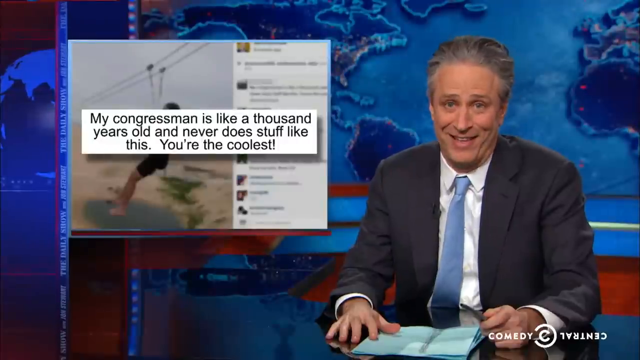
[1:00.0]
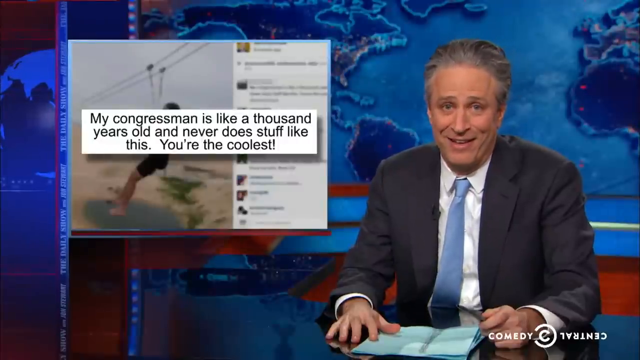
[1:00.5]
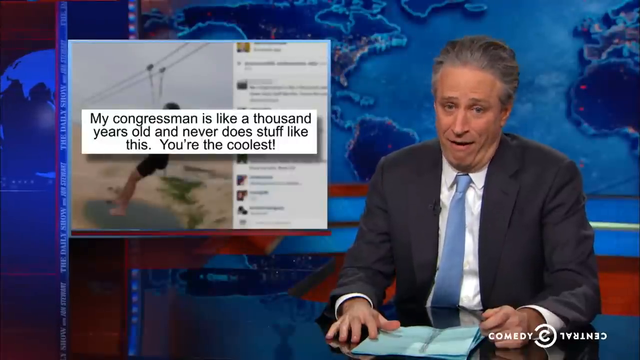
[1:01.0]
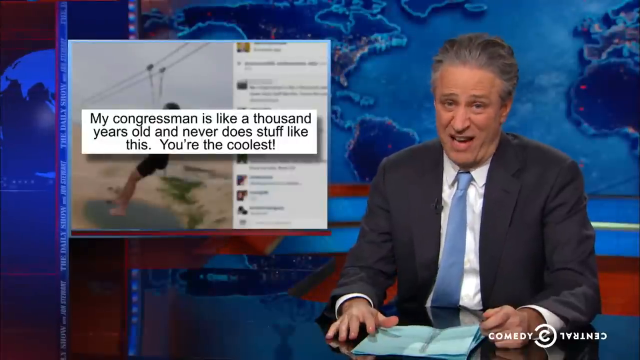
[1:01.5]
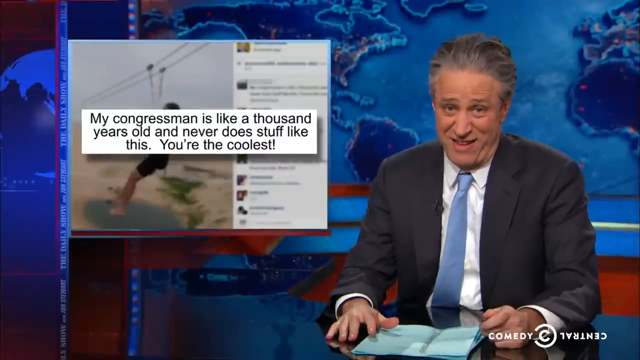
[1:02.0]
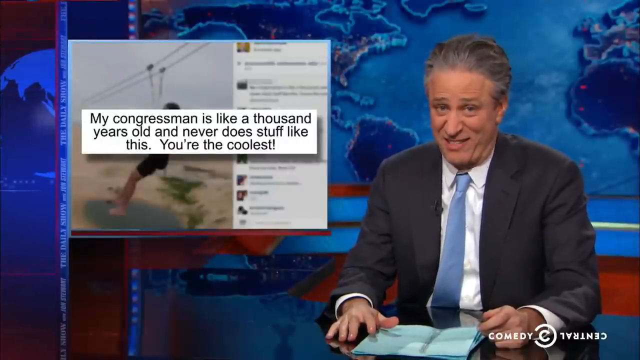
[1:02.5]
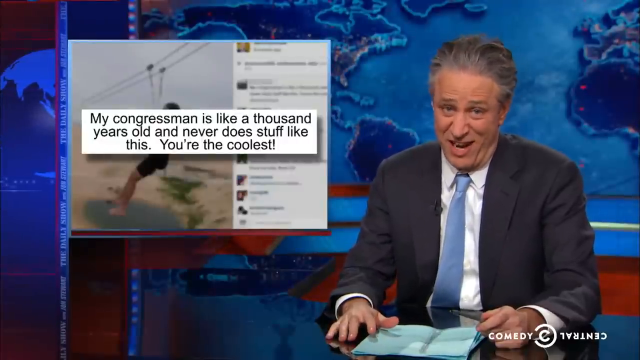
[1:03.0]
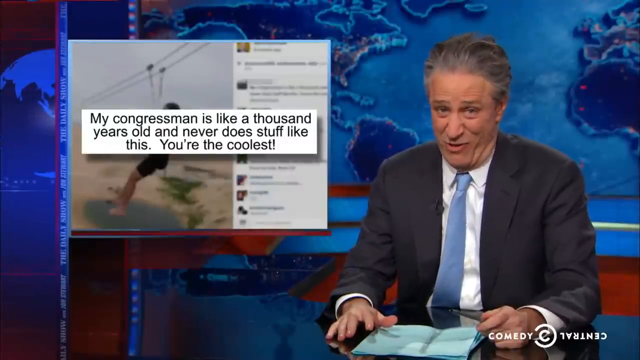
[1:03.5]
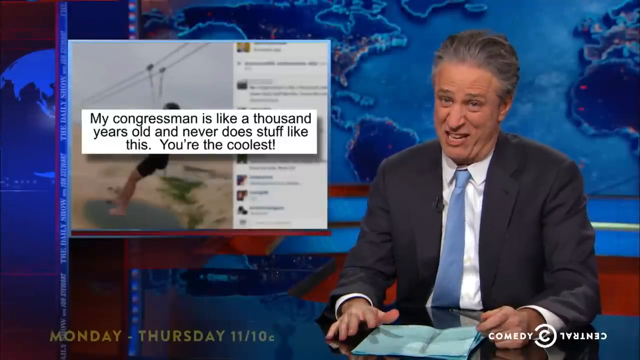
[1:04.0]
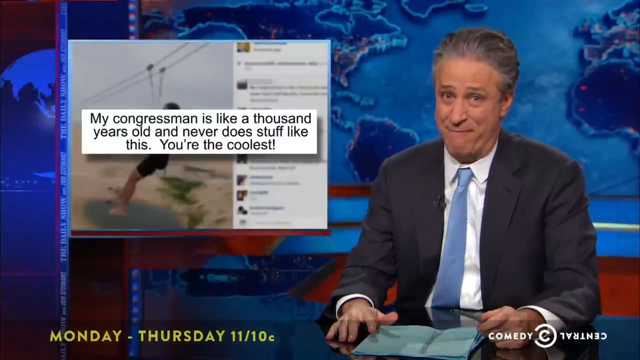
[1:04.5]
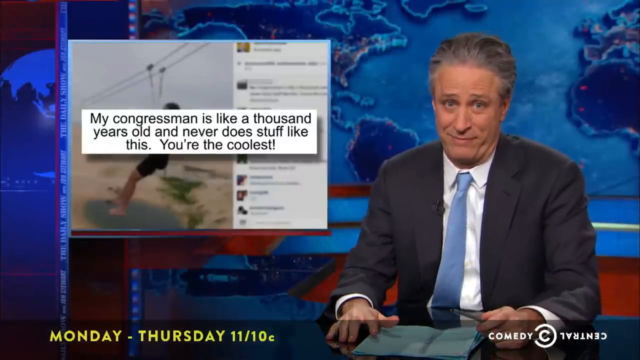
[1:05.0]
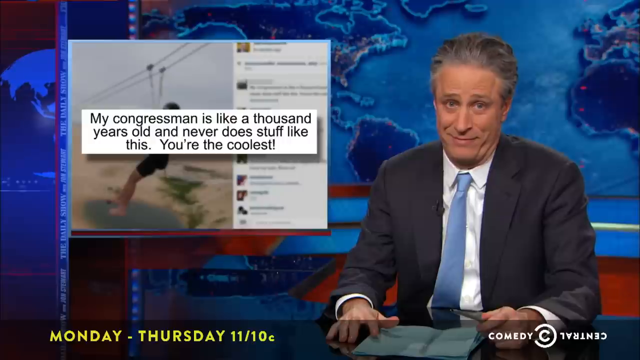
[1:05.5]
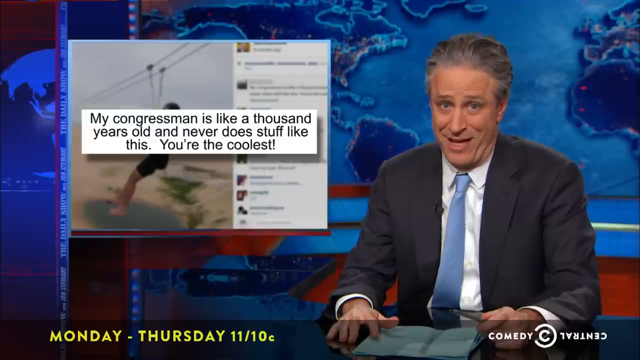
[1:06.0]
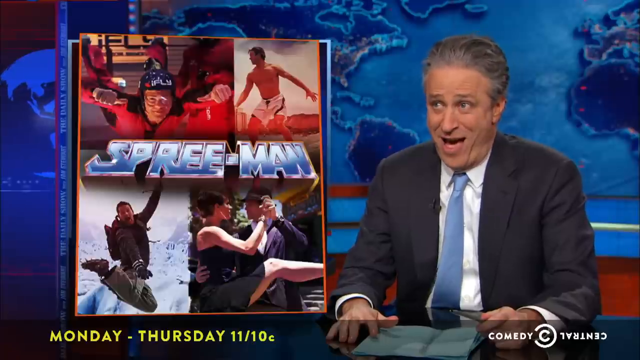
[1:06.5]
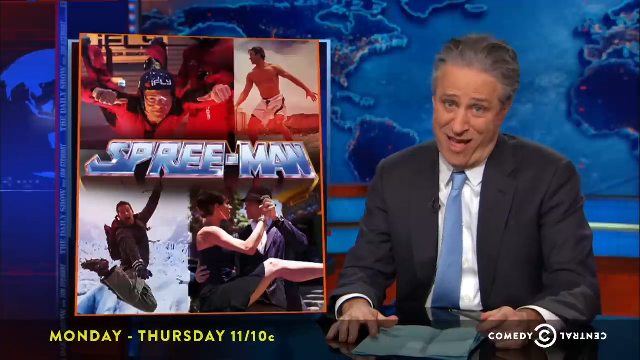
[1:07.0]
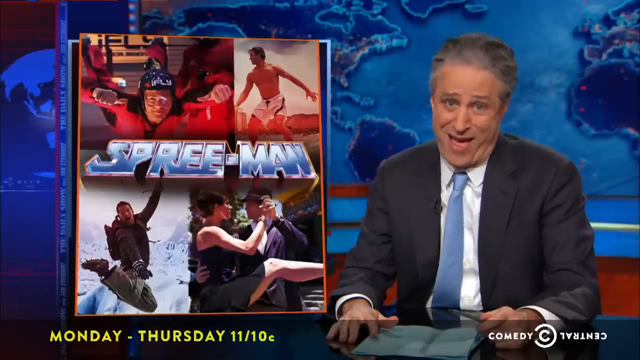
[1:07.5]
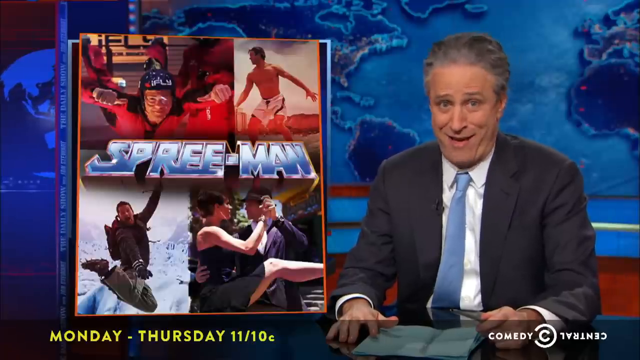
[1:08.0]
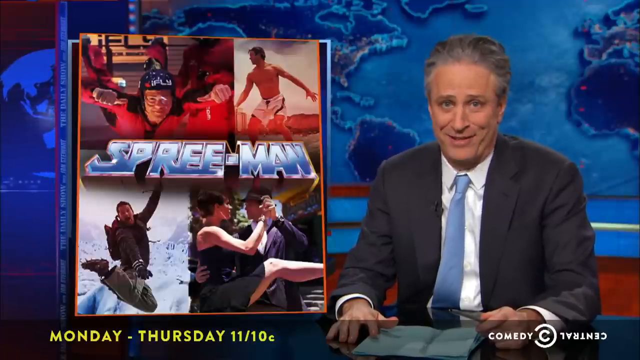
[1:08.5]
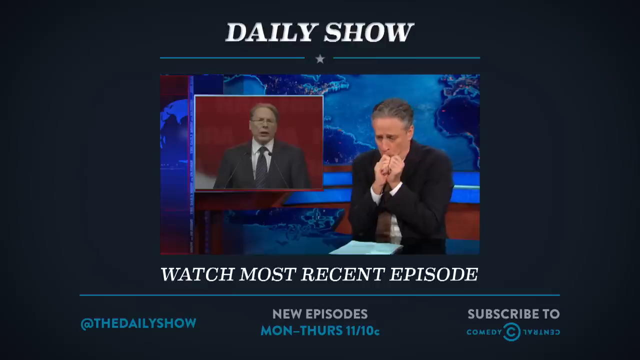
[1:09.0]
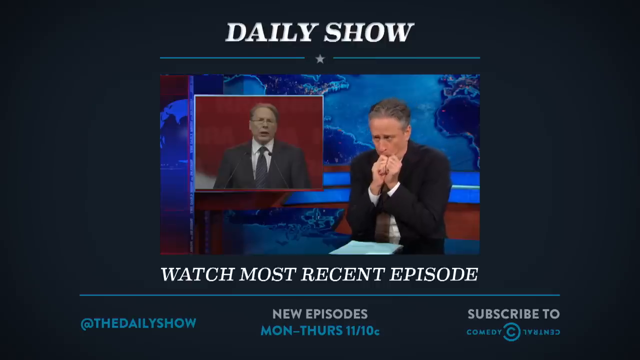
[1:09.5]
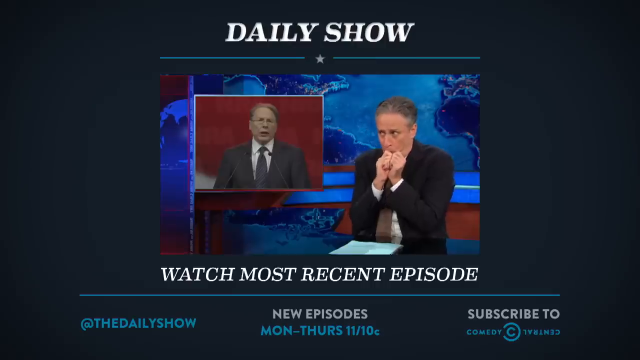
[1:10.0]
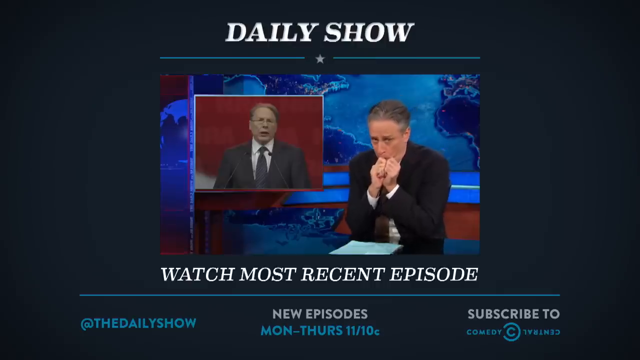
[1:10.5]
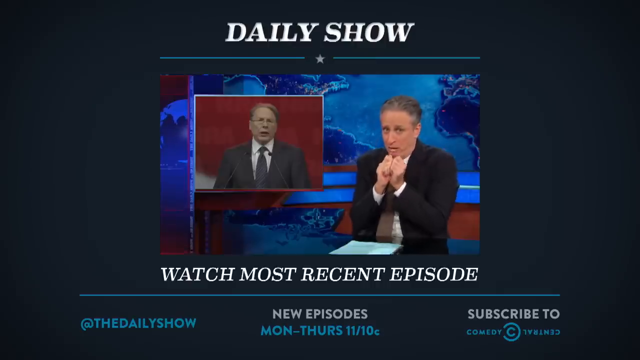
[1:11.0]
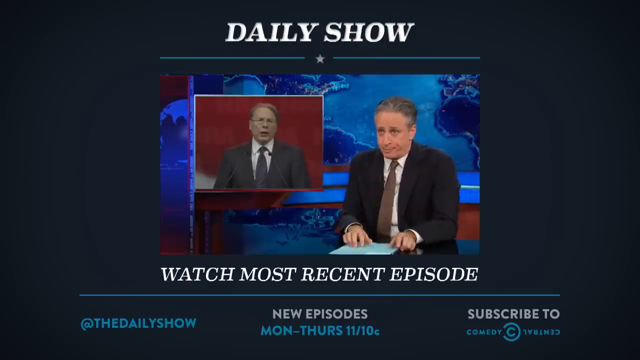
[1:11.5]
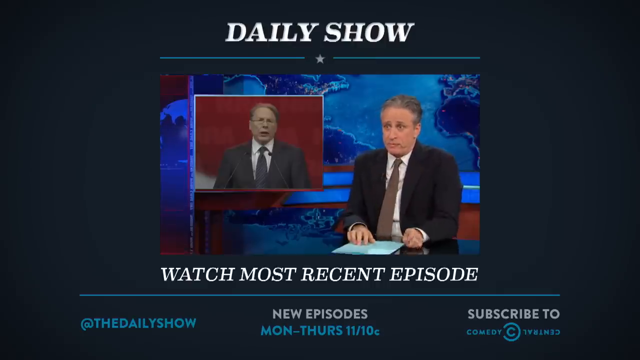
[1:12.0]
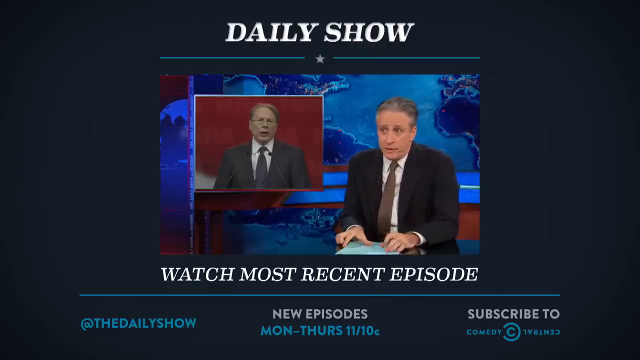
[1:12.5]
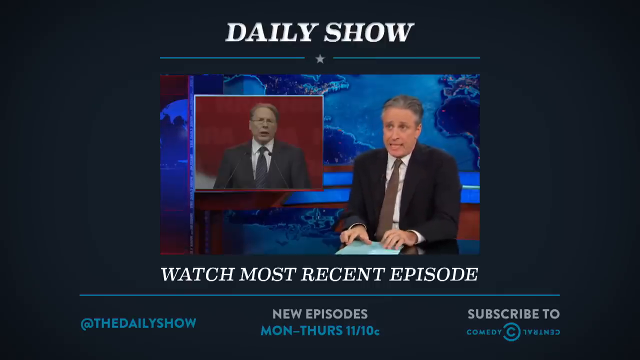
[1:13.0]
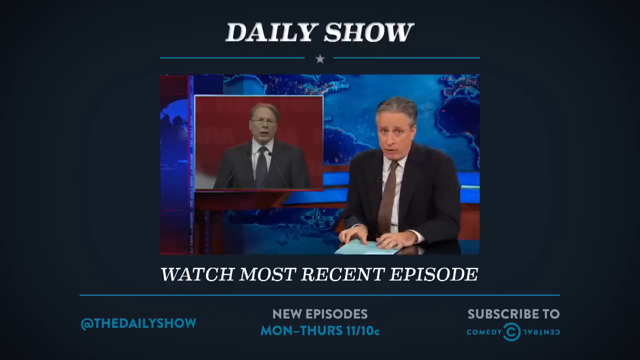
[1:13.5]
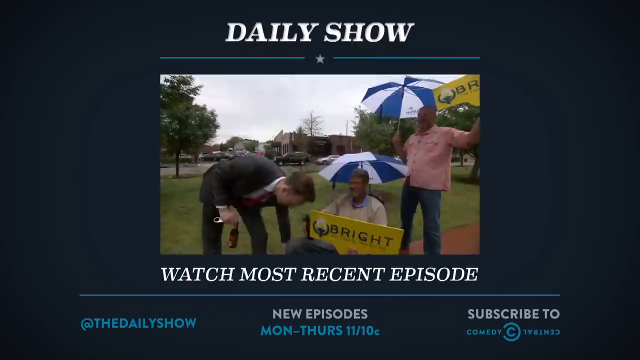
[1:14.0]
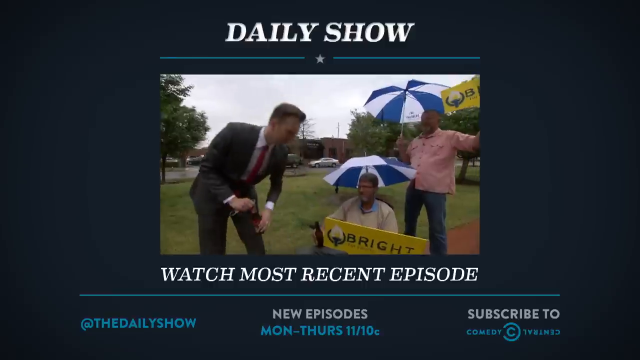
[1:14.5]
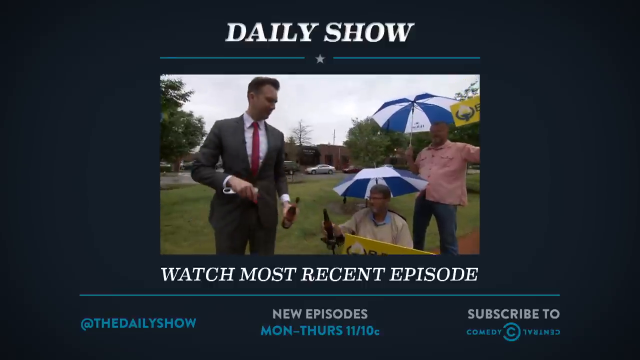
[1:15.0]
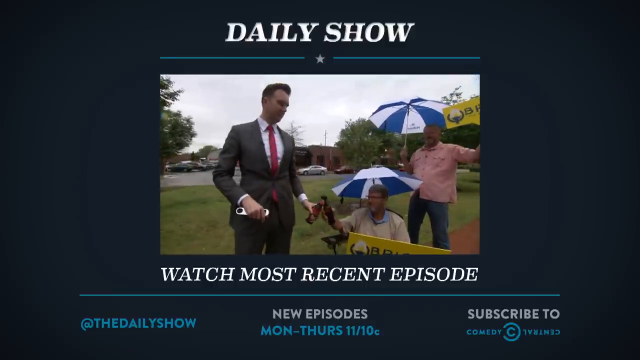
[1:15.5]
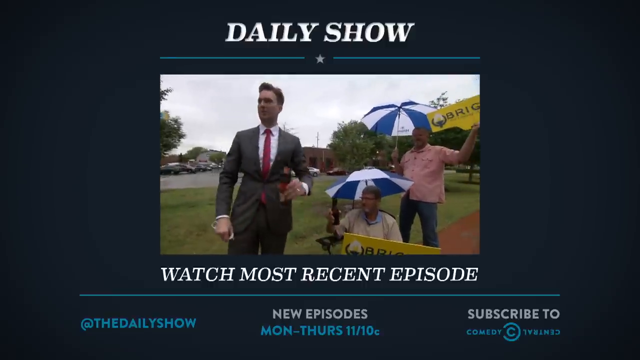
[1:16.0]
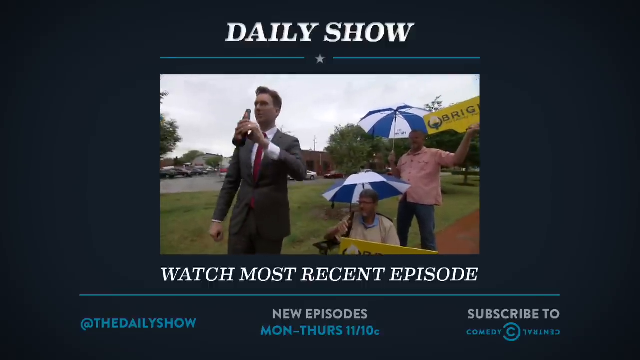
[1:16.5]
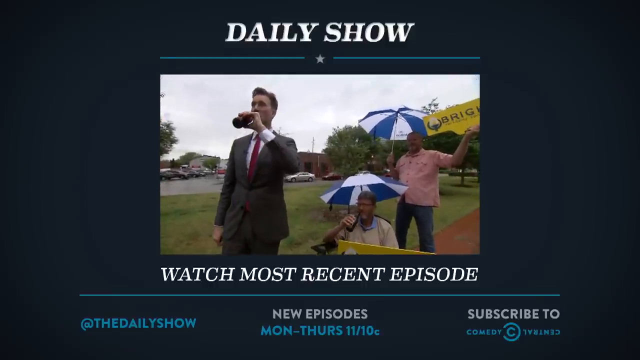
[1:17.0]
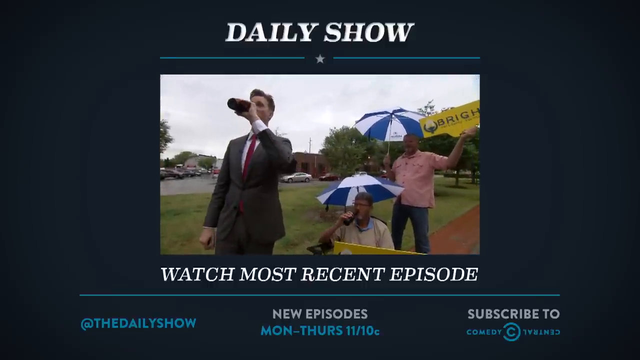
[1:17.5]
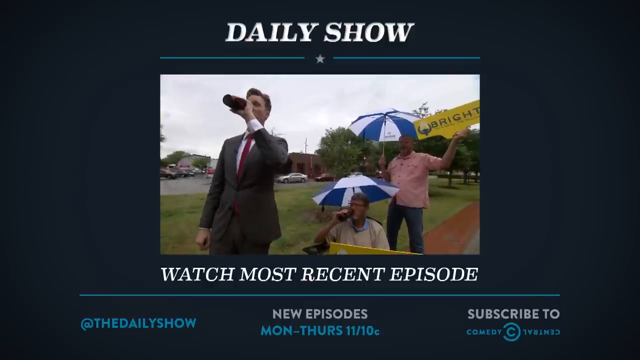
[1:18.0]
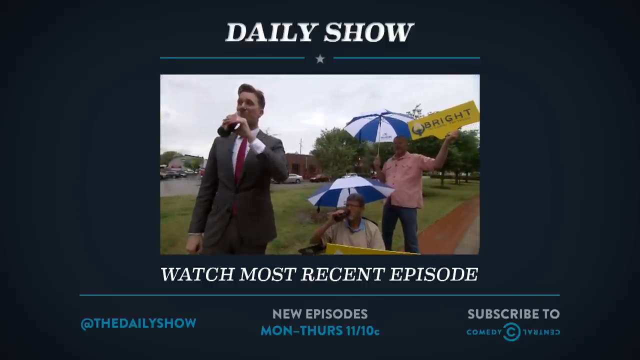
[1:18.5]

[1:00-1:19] Jon Stewart makes an incredulous face in response to the Instagram comment "my congressman is like a thousand years old and never does stuff like this you're the coolest." The graphic then switches to "Spree man" in a superhero-style font again, showing the pictures Schock posted on Instagram: at the beach, at a glacier, dancing, and other vacation activities. The scene then cuts to something like a YouTube ending credit, a clip from another Daily Show episode in which Stewart talks about a politician standing in front of a podium with a red background.